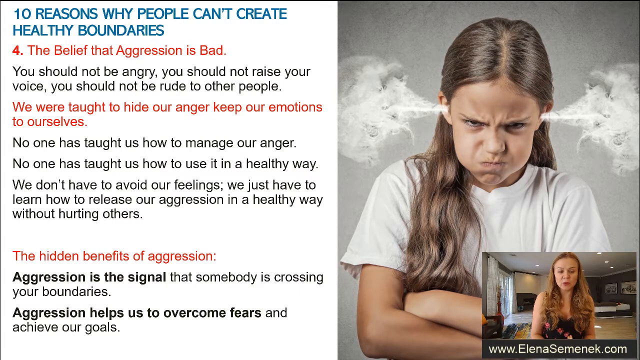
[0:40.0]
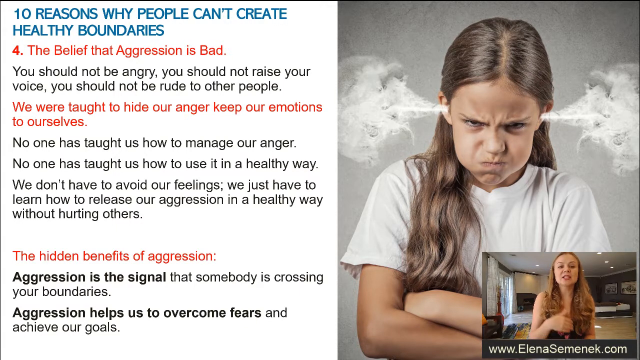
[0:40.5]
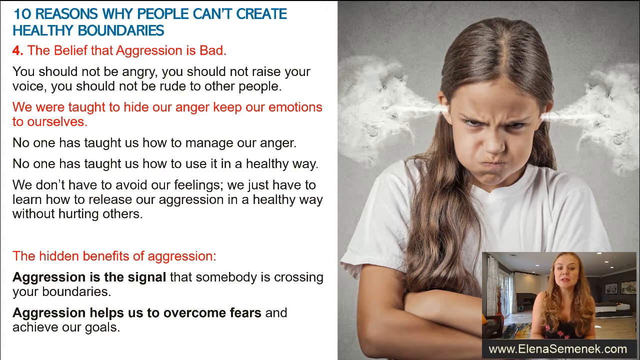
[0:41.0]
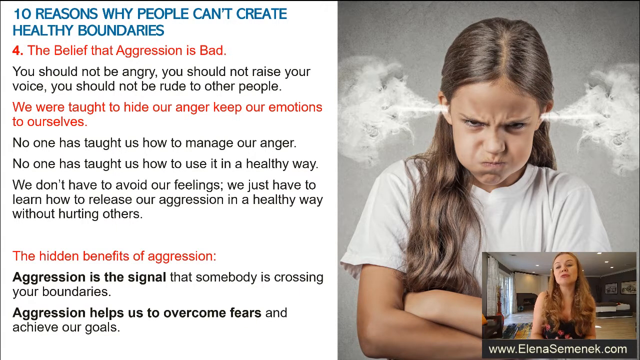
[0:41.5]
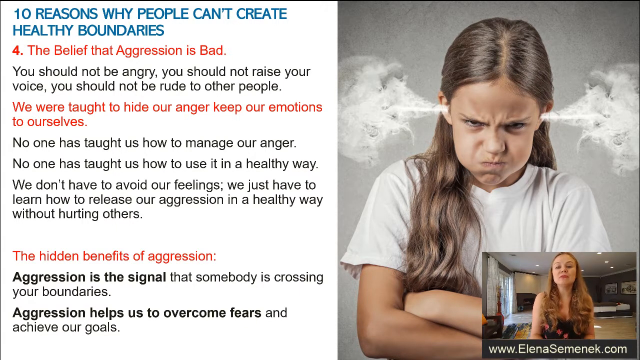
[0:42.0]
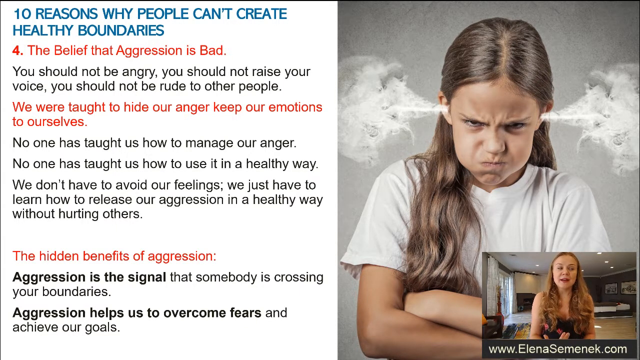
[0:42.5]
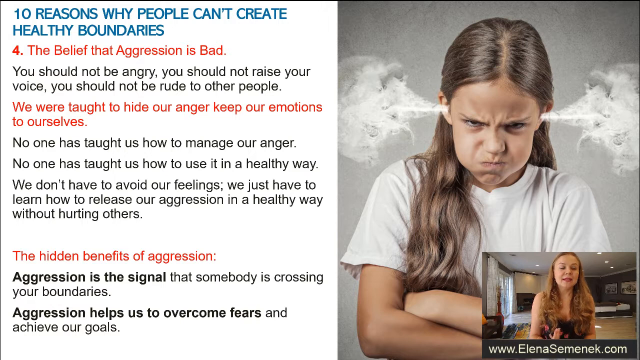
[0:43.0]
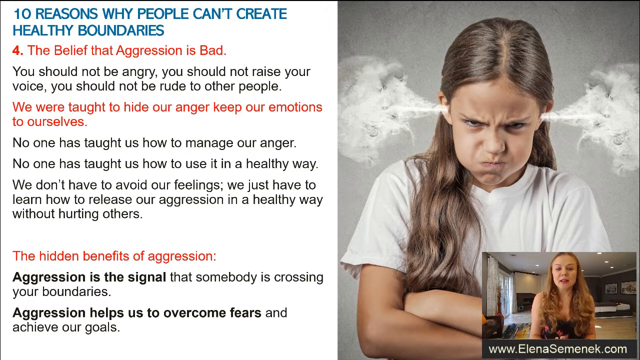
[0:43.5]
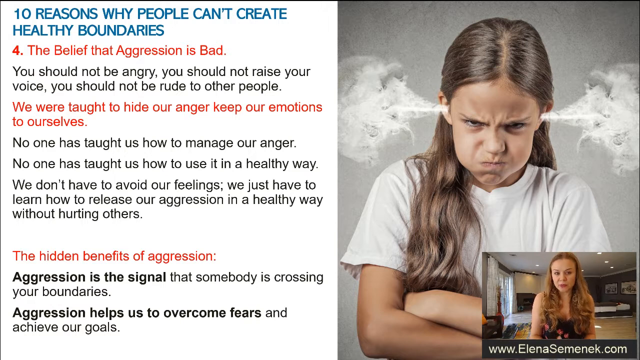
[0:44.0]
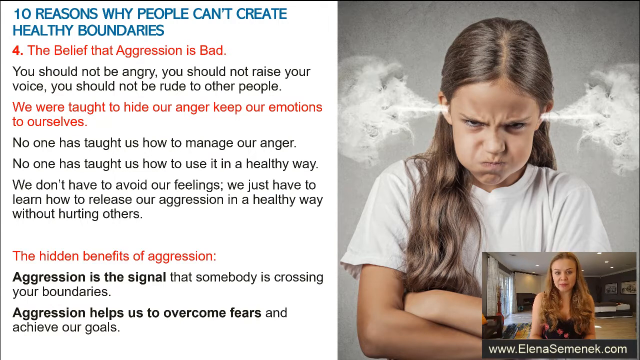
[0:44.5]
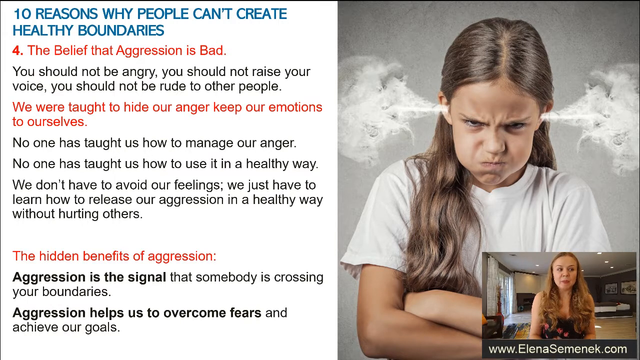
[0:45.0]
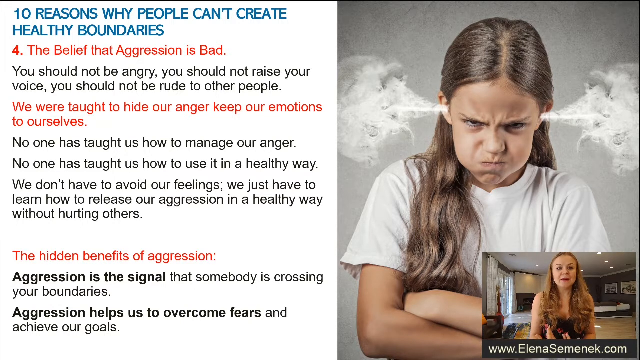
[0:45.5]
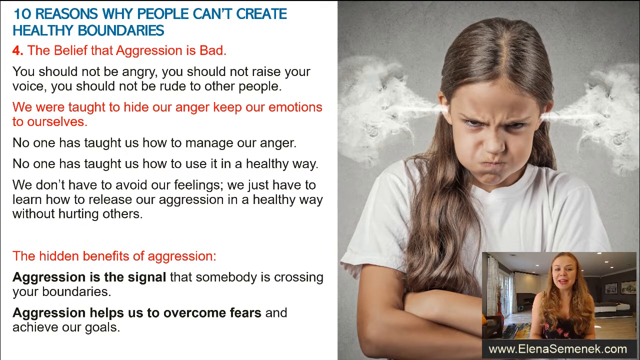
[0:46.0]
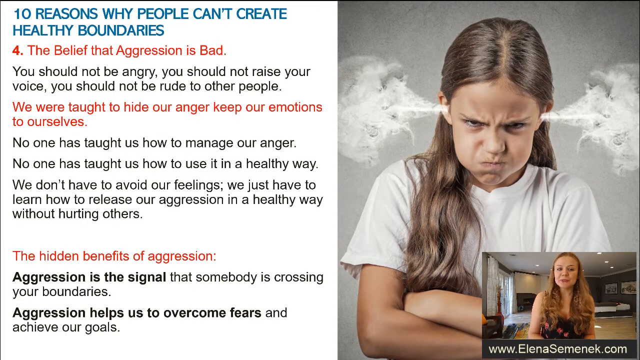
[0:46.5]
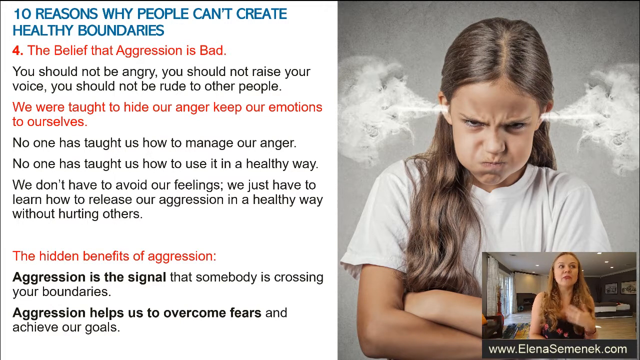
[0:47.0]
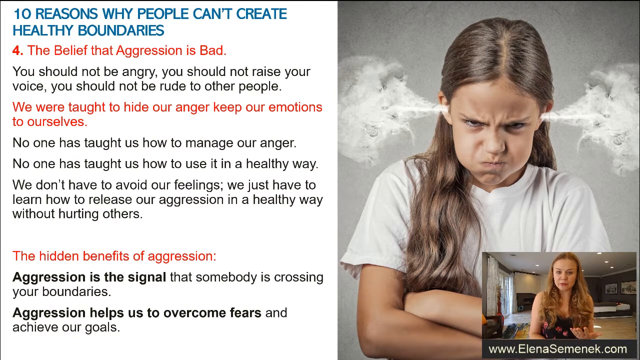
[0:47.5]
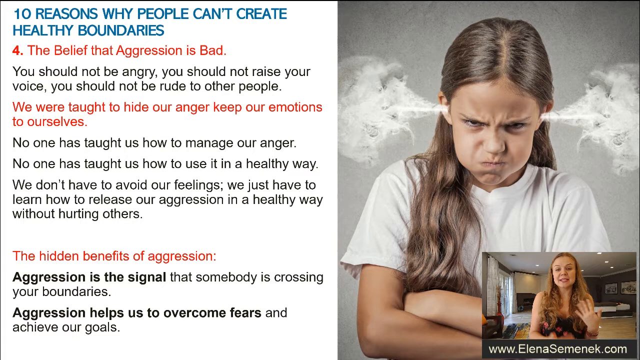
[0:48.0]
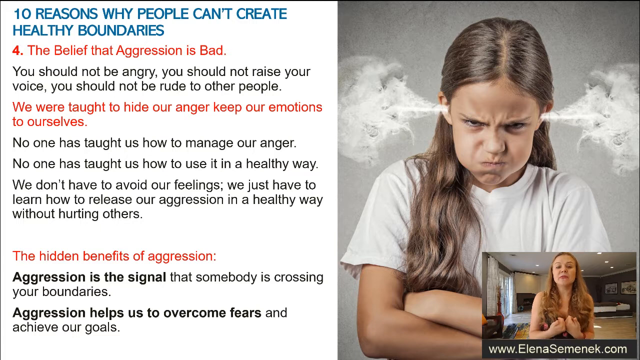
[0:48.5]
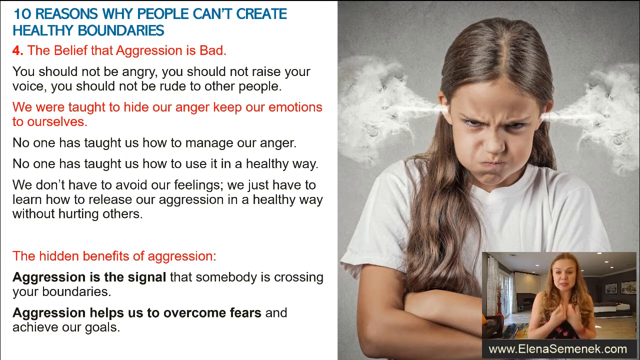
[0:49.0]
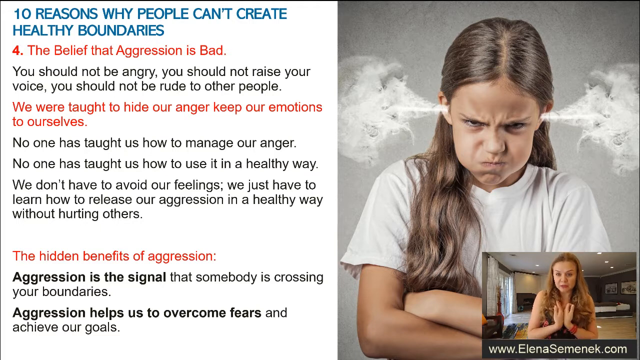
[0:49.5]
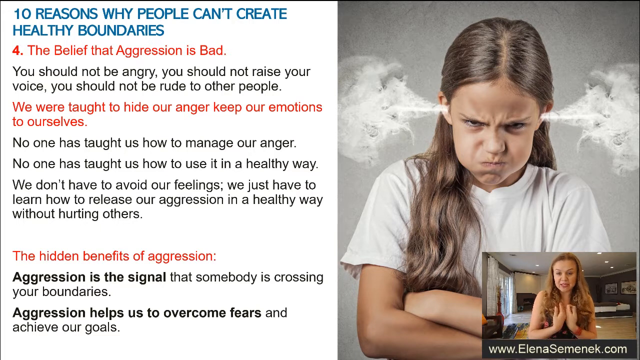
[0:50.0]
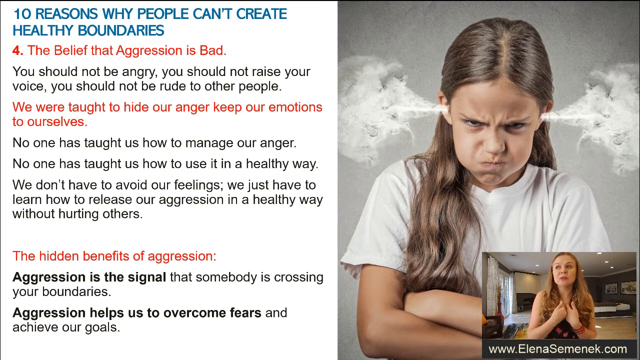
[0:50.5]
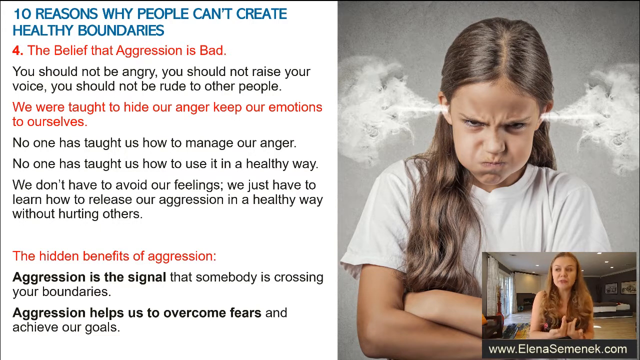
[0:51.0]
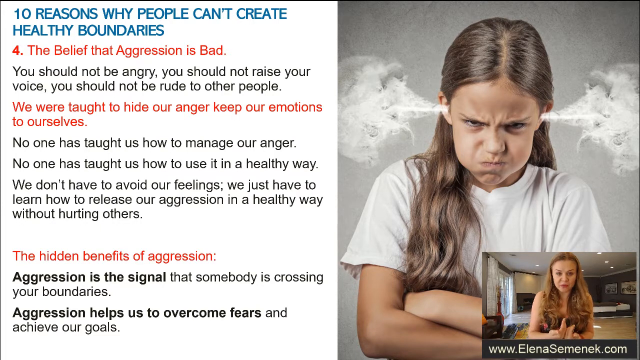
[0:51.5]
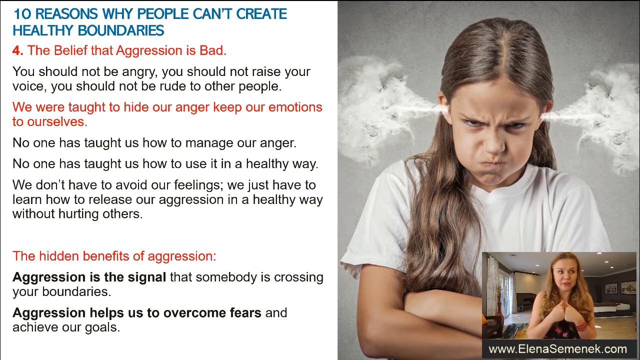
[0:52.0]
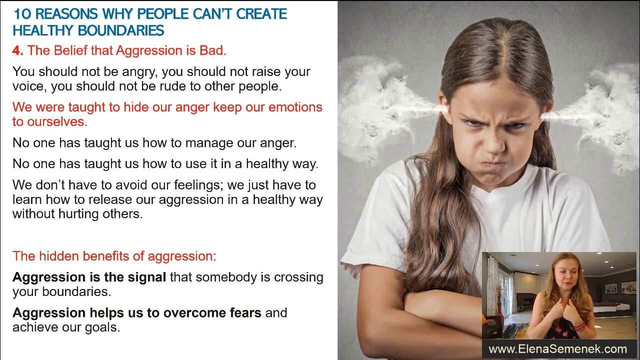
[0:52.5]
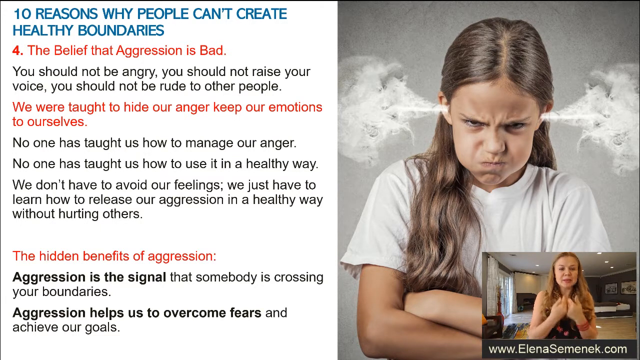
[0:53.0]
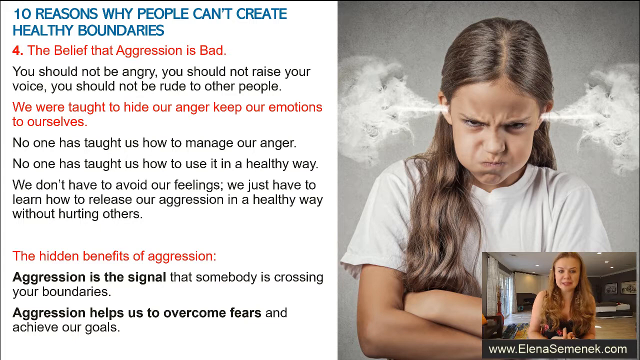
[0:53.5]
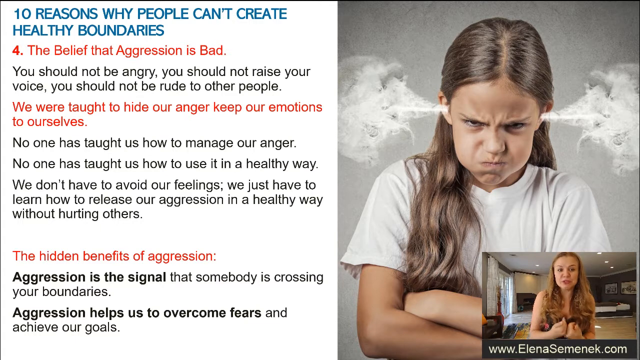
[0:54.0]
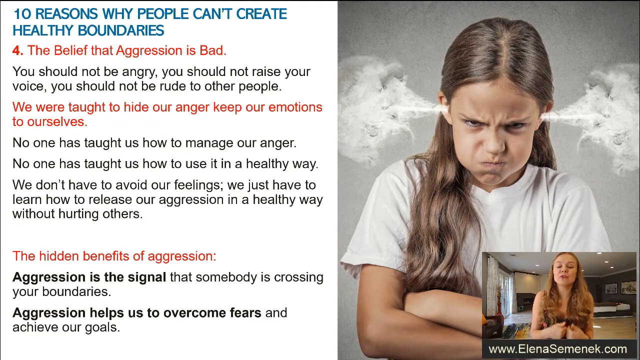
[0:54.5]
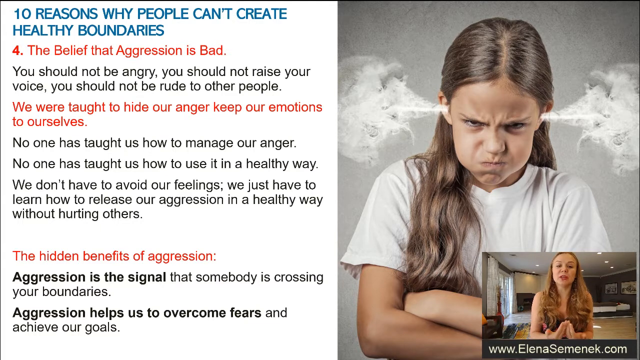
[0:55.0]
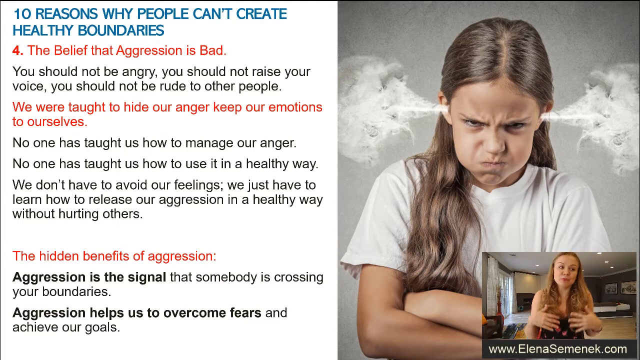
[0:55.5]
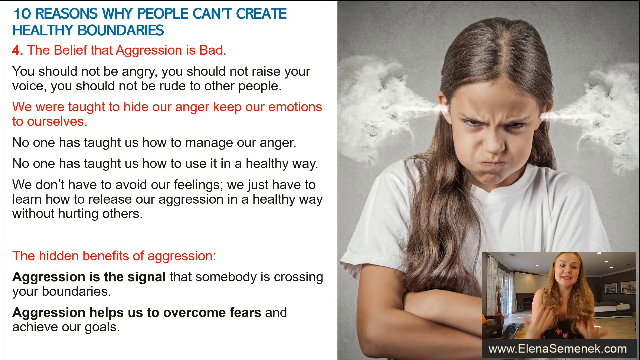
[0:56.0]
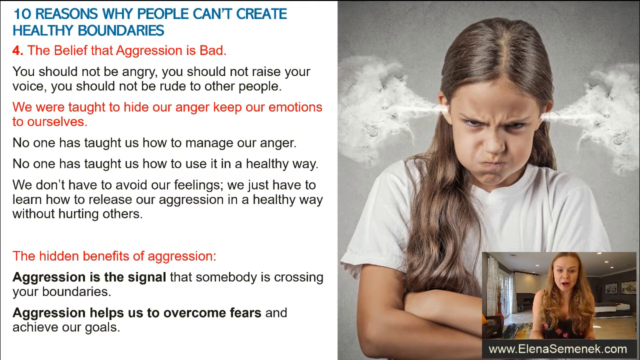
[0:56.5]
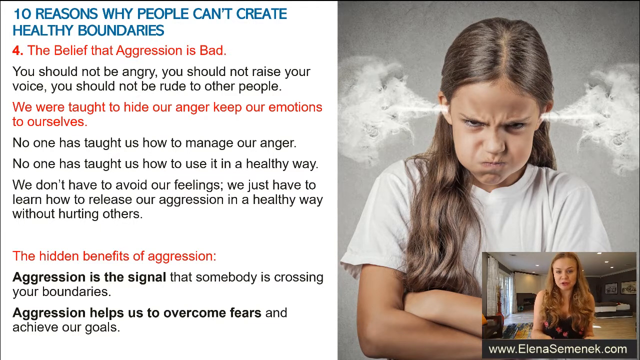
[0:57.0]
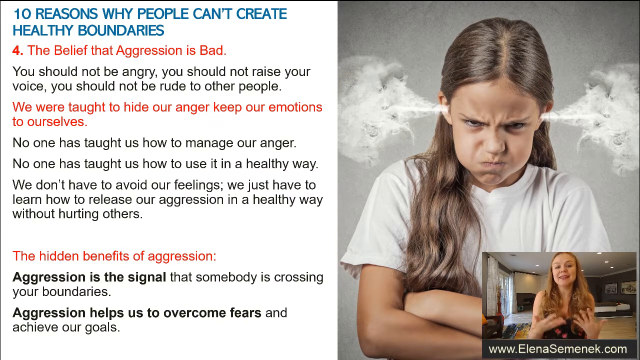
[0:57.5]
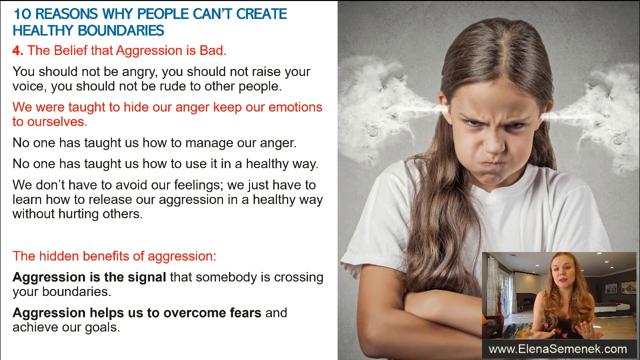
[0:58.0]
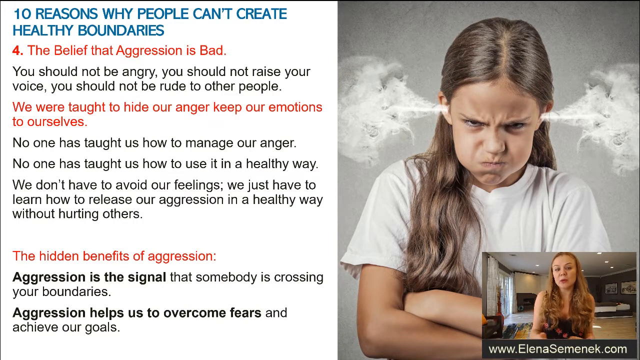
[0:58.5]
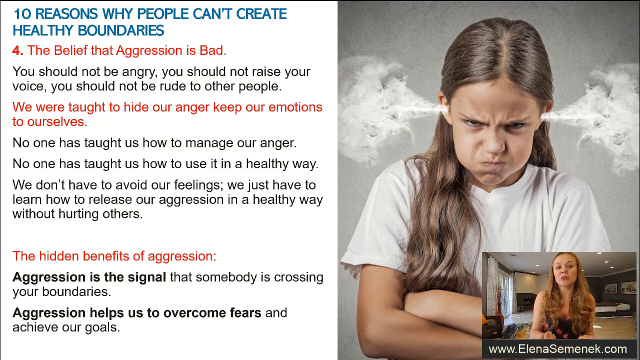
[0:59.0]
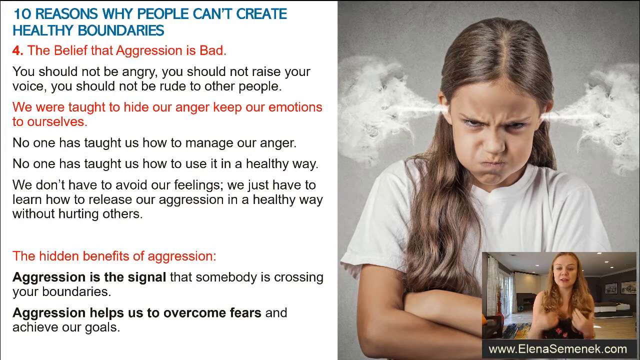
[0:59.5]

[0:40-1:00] The screen is divided into left and right sides. On the left is text with the heading "10 reasons why people can't create healthy boundaries" in blue, then a heading in red, "4. the belief that aggression is bad". Text follows saying you should not be angry, you should not raise your voice, you should not be rude to other people. The next heading, in red, is "we were taught to hide our anger keep our emotions to ourselves", followed by "No one has taught us how to manage our anger. No one has taught us how to use it in a healthy way." After a bit more text comes the final heading, "the hidden benefits of aggression", with more text explaining that aggression is the signal that somebody is crossing your boundaries. On the right is a young girl with pigtails, a centre parting and an angry expression, with smoke coming out of her ears. She wears a white t-shirt and has her arms folded. In the bottom right-hand corner a woman with long brown hair and a centre parting narrates the video, making hand gestures that convey she is explaining something.